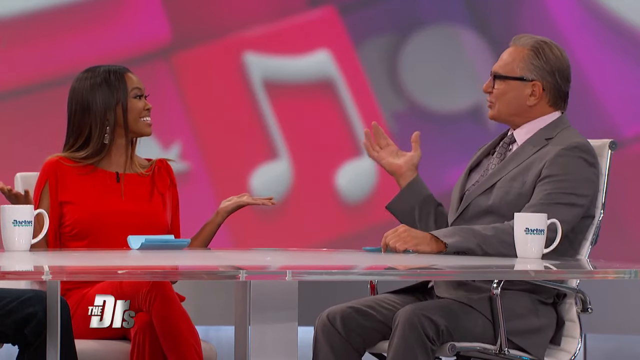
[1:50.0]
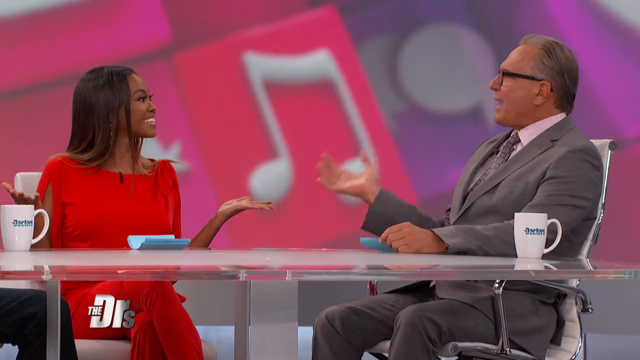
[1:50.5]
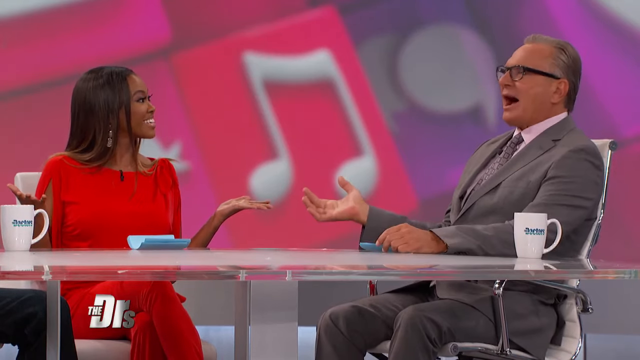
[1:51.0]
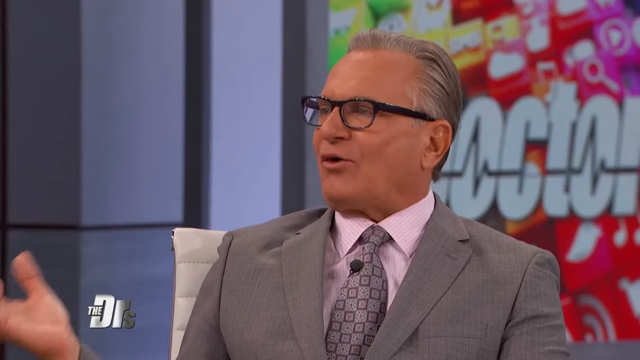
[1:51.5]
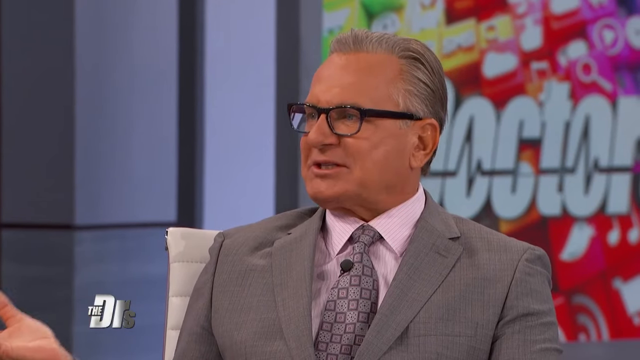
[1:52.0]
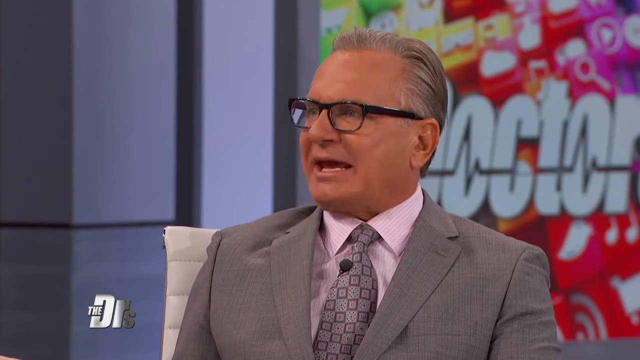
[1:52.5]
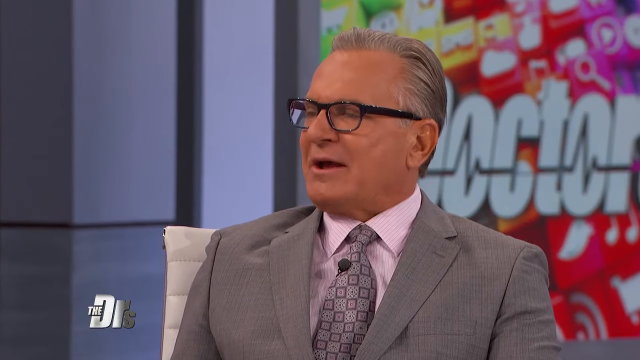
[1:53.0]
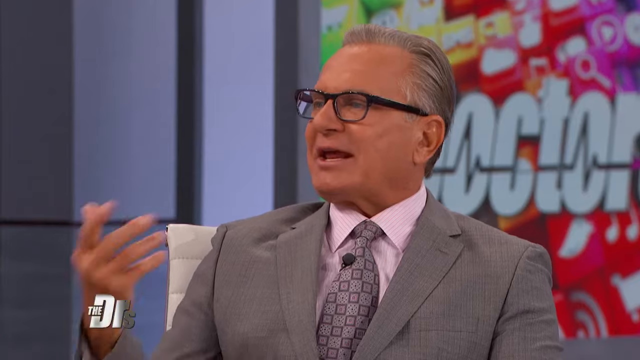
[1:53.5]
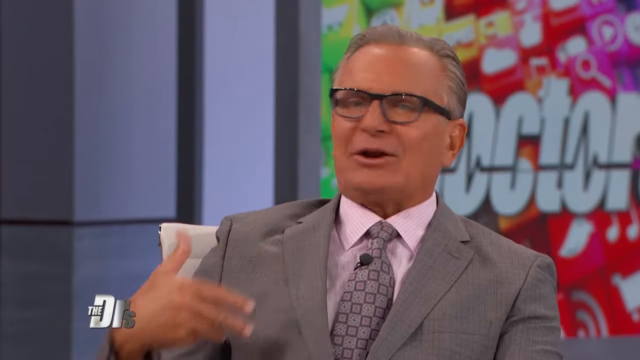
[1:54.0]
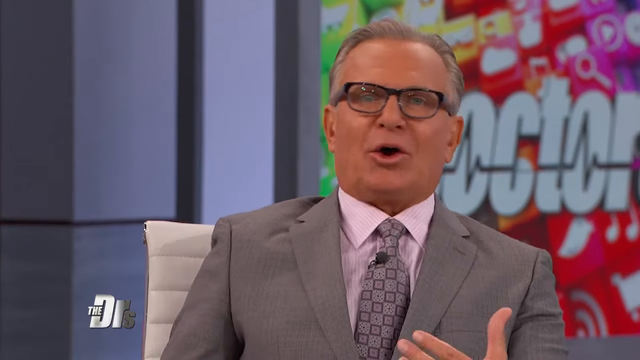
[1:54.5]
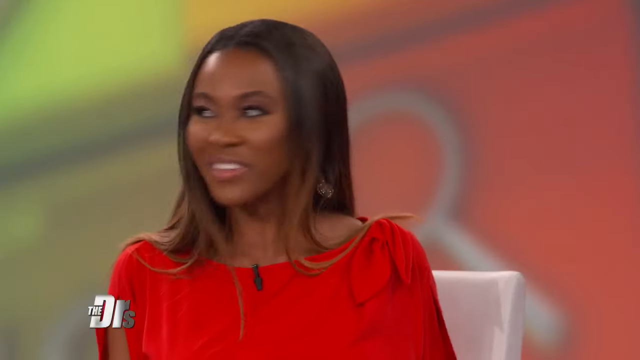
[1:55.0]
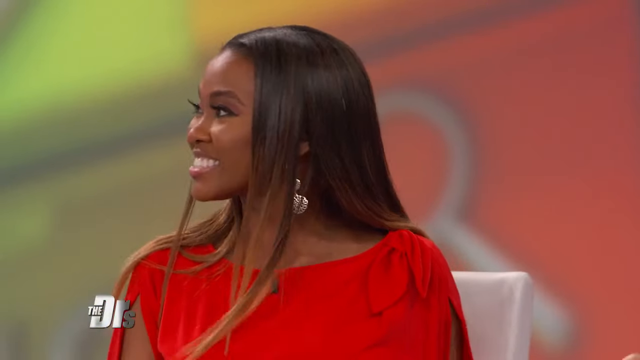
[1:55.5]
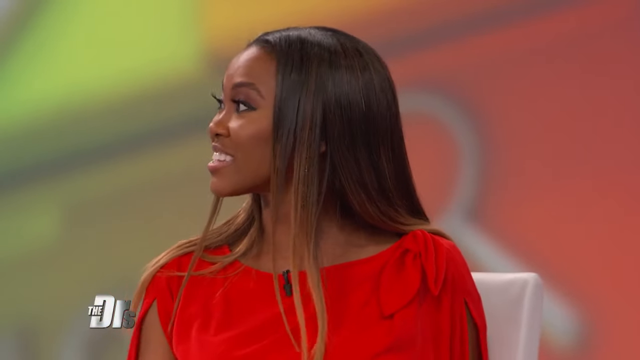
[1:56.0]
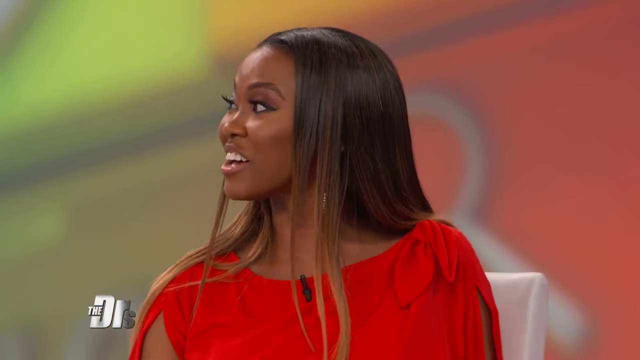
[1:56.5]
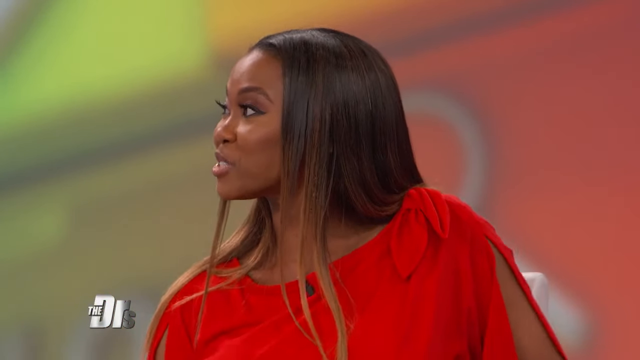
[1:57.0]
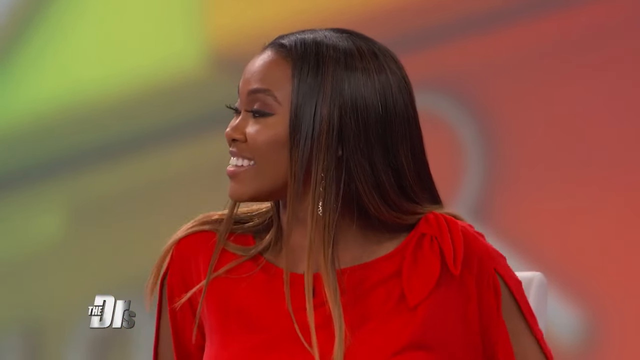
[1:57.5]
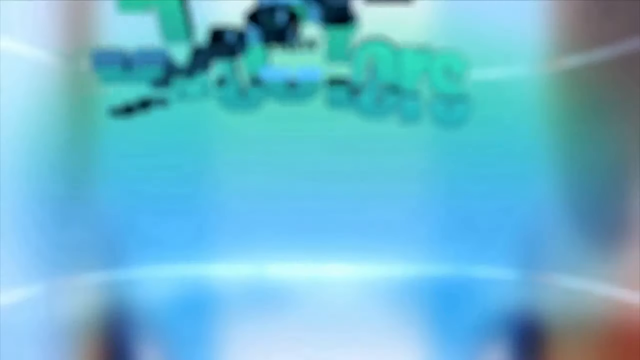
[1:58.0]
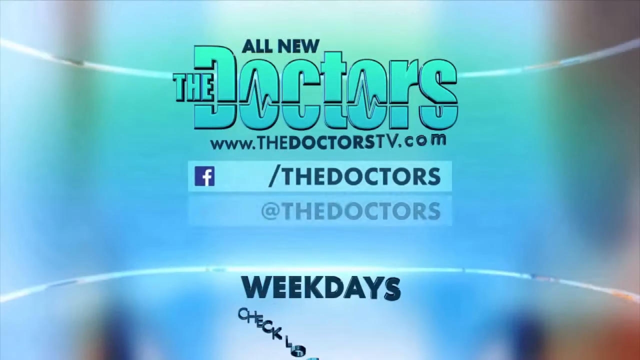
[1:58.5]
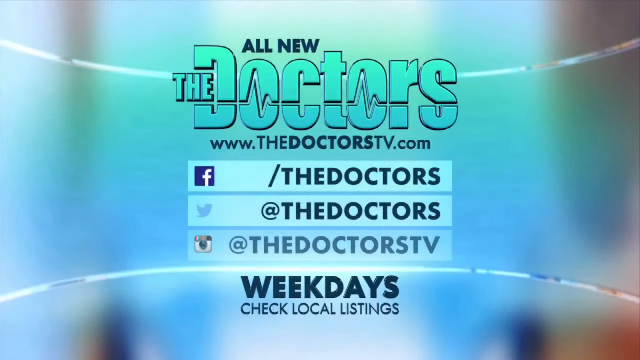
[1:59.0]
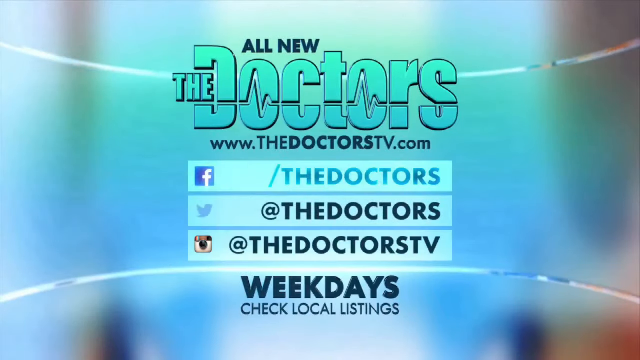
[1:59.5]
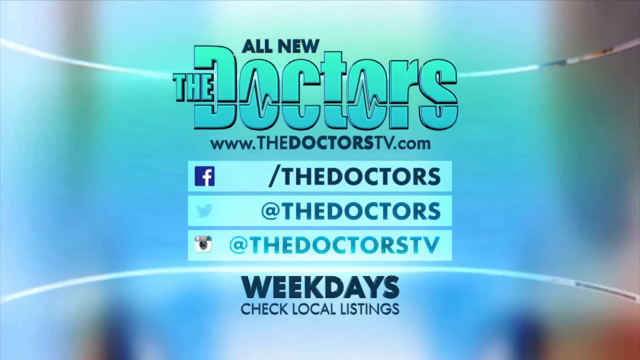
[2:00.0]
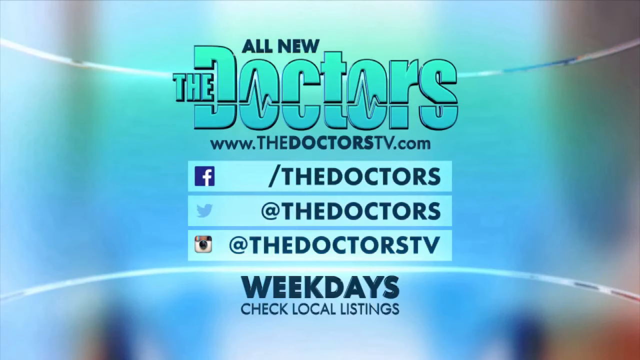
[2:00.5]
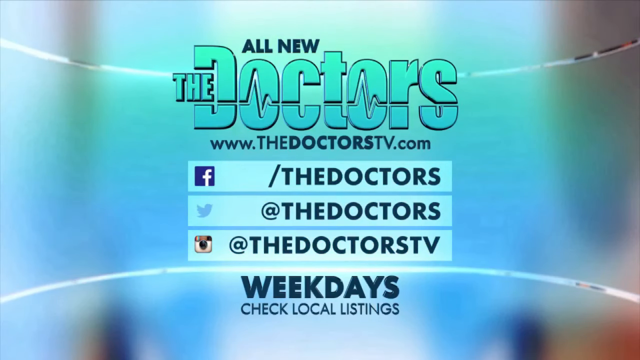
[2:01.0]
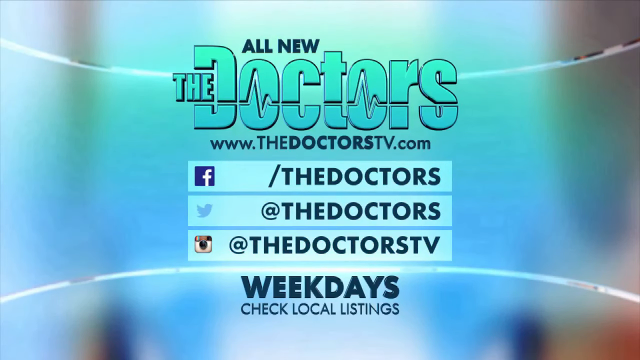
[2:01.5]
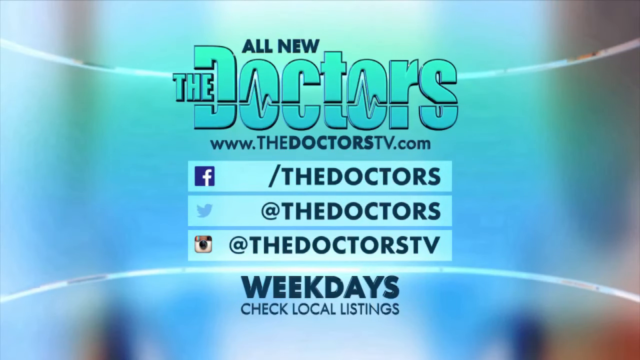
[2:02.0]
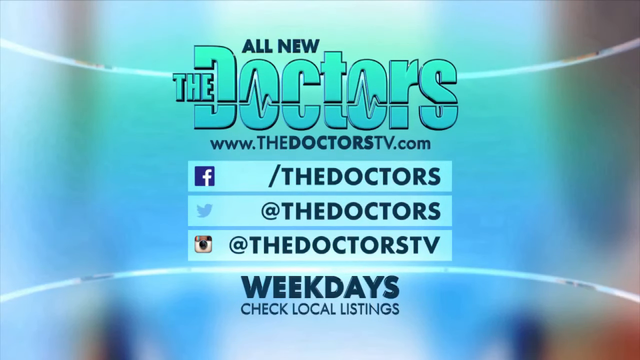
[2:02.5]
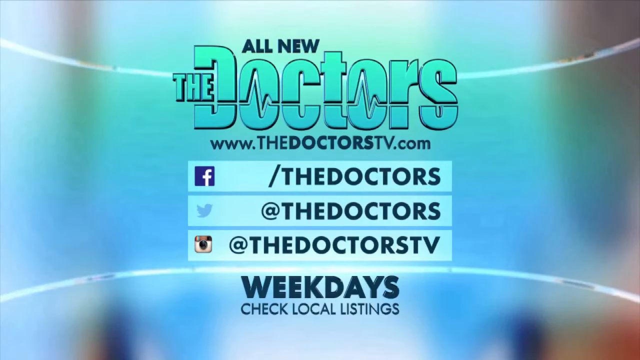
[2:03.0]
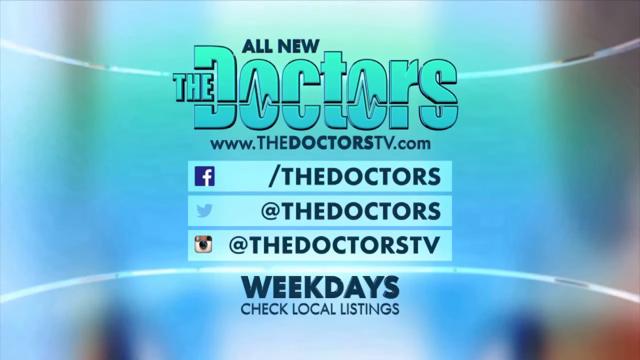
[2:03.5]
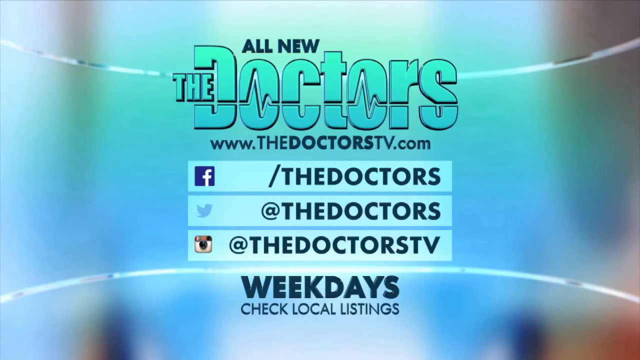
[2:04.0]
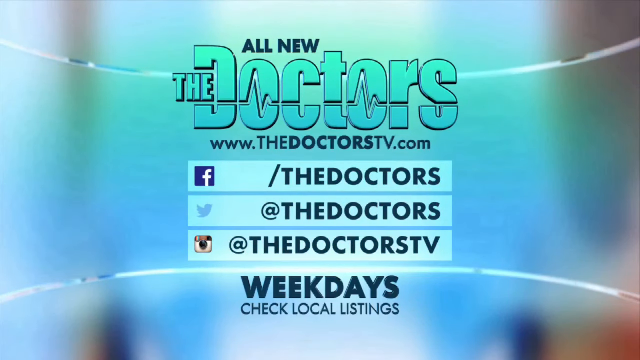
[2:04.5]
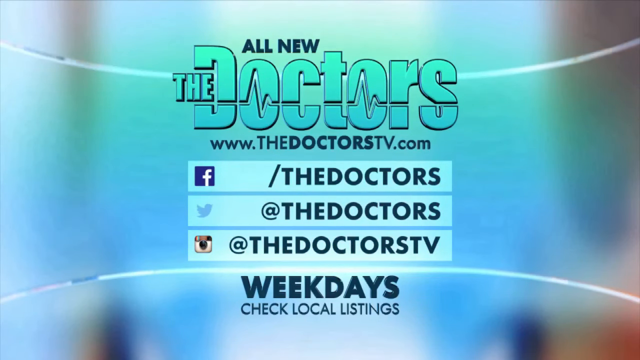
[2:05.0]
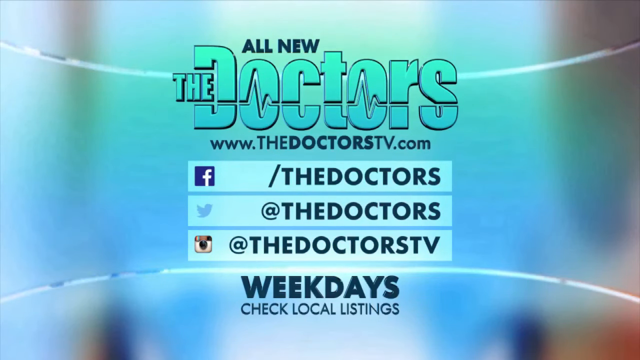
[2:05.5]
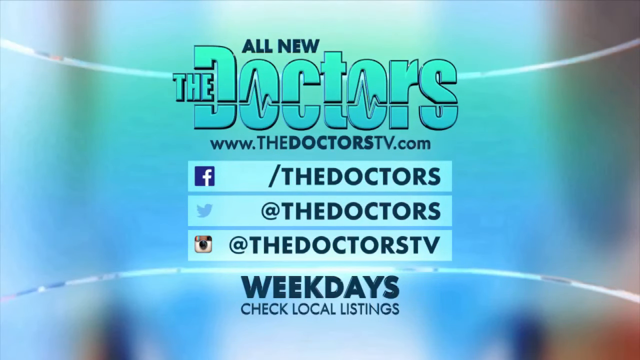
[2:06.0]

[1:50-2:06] The woman's hands are out. Her co-host has one hand on the blue paper, with a coffee cup next to his arm. His right hand is raised to about breast level, palm up and the back of the hand angled down toward the floor. He continues making his point, shaking his hand, then points to himself with an open hand. A title card follows on a heavily blue background: "all new", "The Doctors", "www.thedoctorstv.com", a Facebook handle, a Twitter handle, an Instagram handle, and "Weekdays, check local listings." Pulse lines run through the word "doctors," which is in a larger font than anything else. The social media handles are inside lighter boxes that draw attention to them.